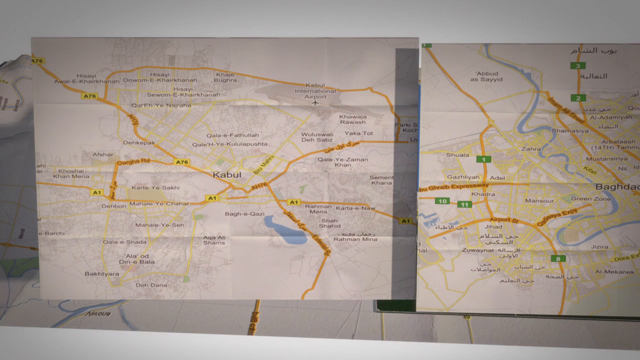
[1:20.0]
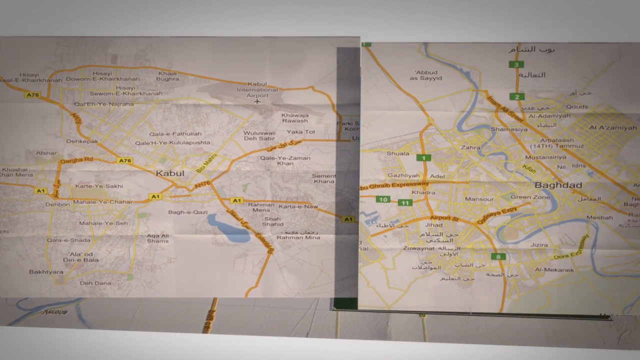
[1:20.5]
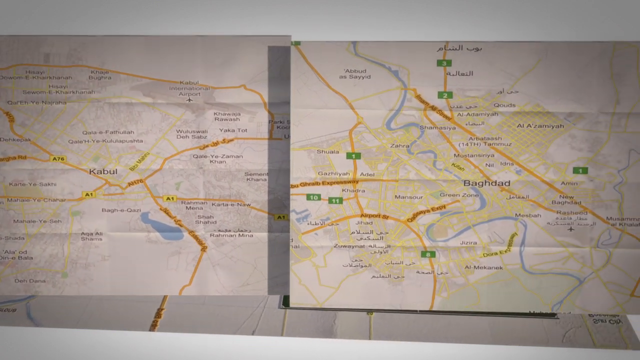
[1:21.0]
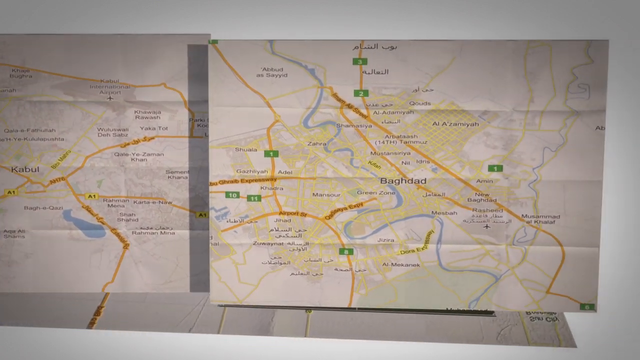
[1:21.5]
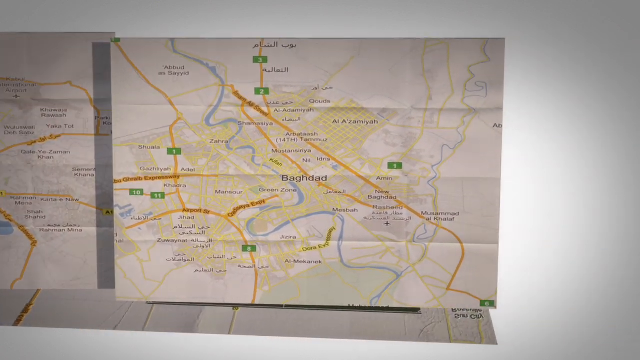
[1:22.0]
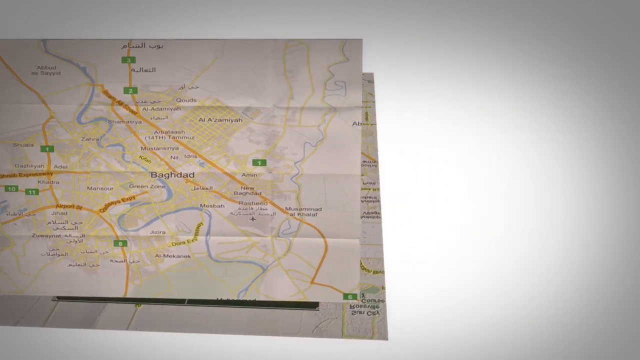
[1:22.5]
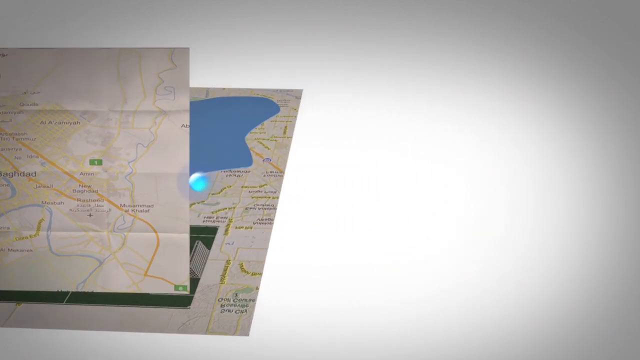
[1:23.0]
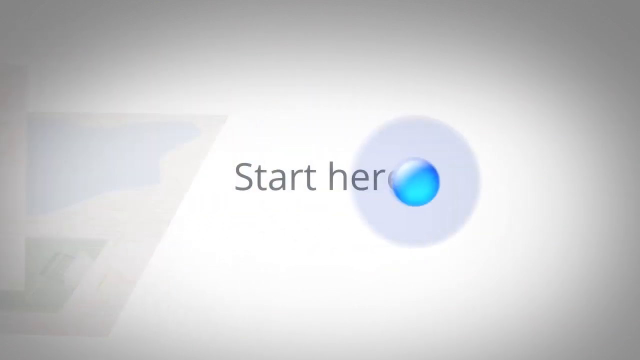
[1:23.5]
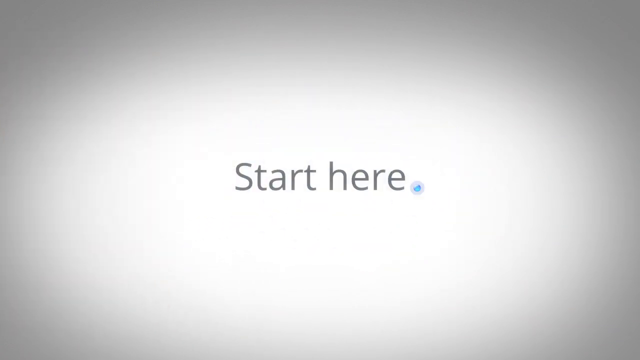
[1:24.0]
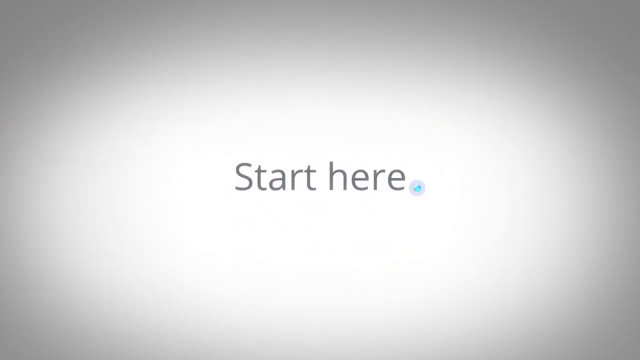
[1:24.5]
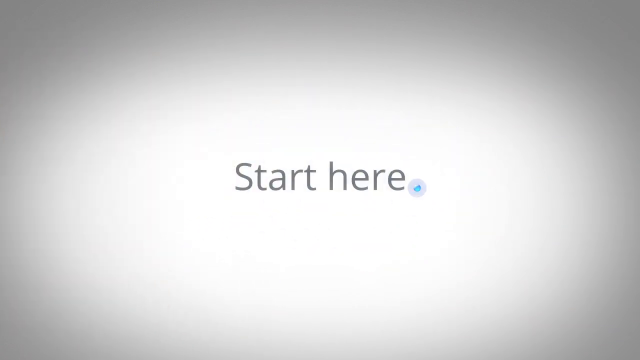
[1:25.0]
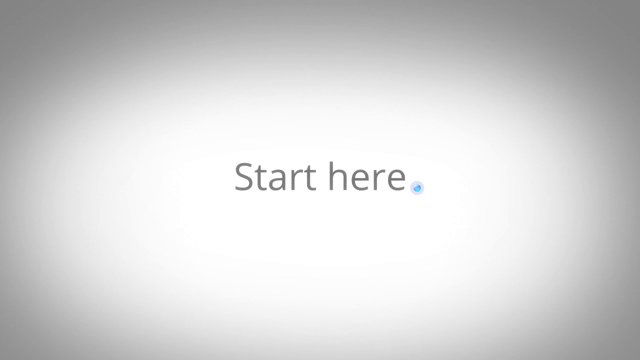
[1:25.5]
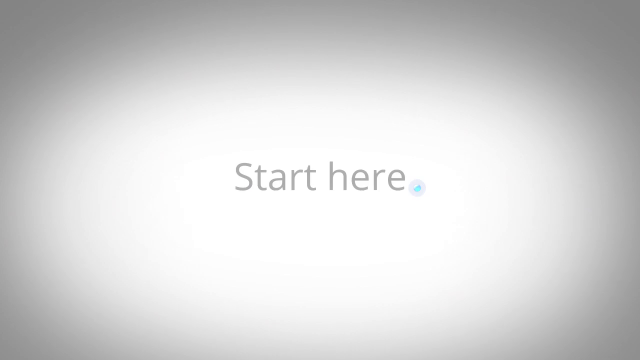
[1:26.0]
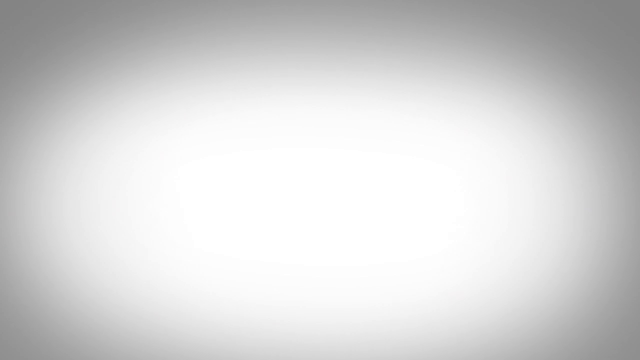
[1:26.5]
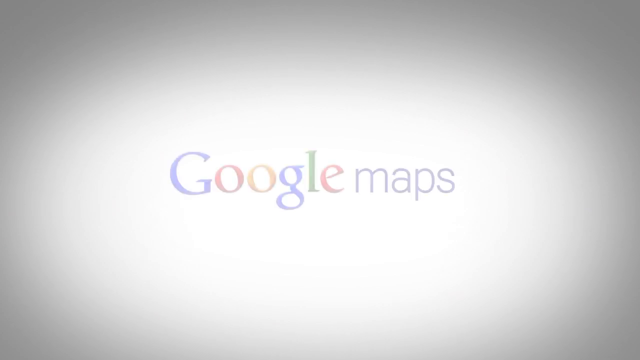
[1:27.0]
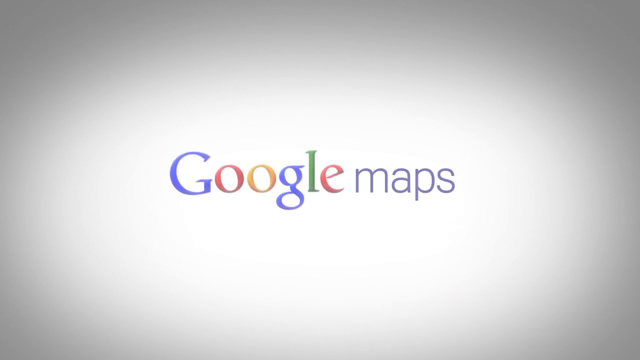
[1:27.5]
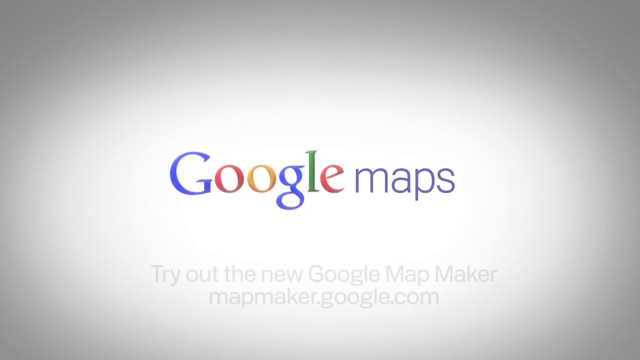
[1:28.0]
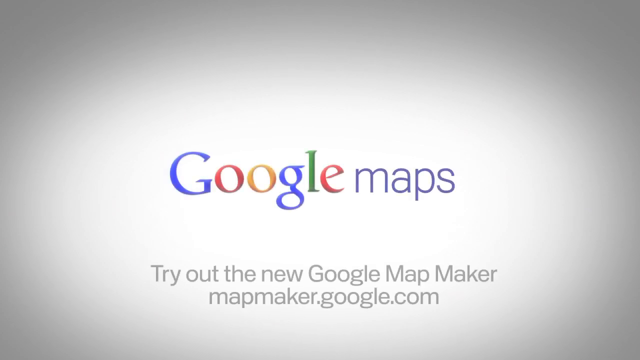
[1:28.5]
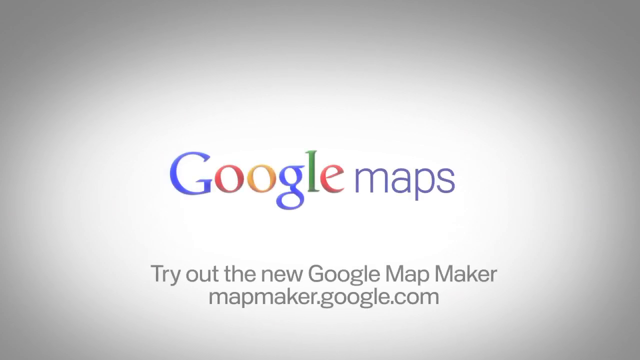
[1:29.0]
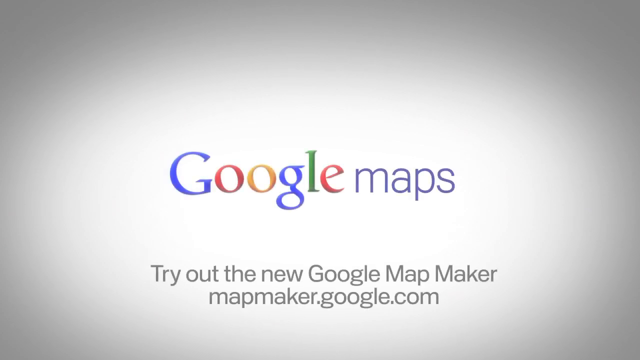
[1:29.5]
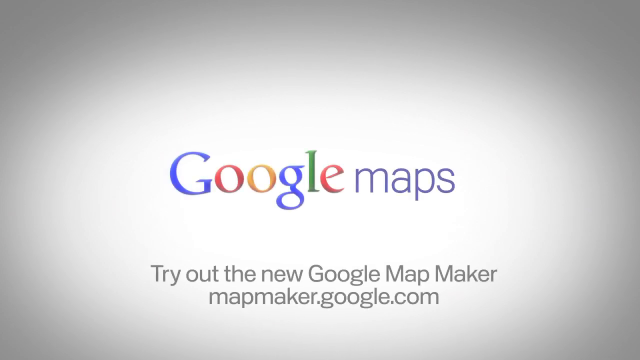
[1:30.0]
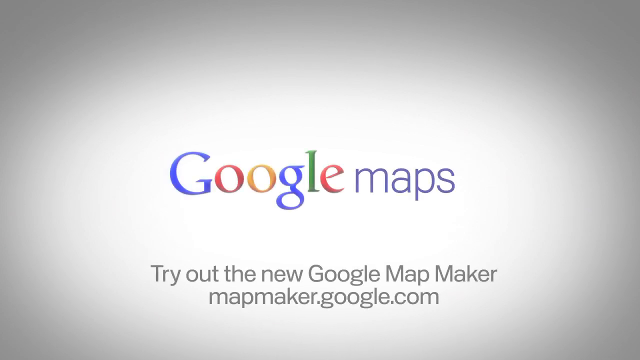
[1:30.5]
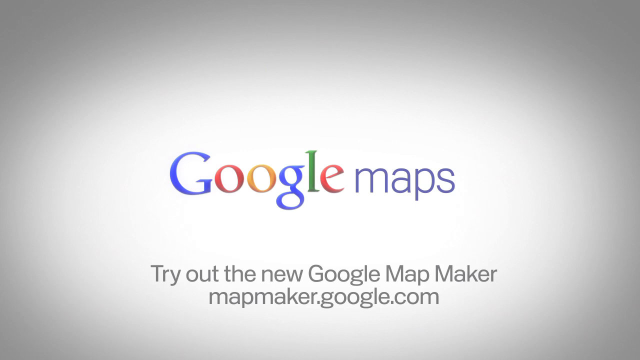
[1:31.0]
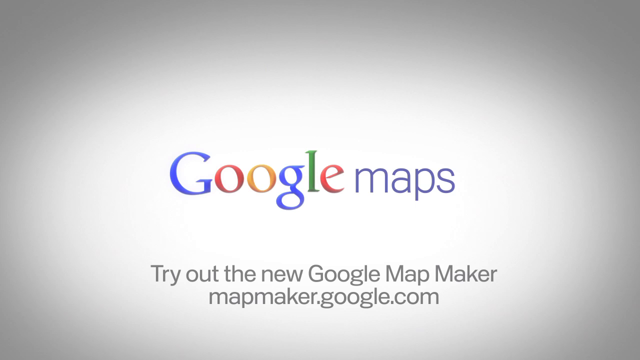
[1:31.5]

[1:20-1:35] The very end of a map is shown, followed by the Google Maps logo. Closing credits appear, along with where to go and a URL for the website.